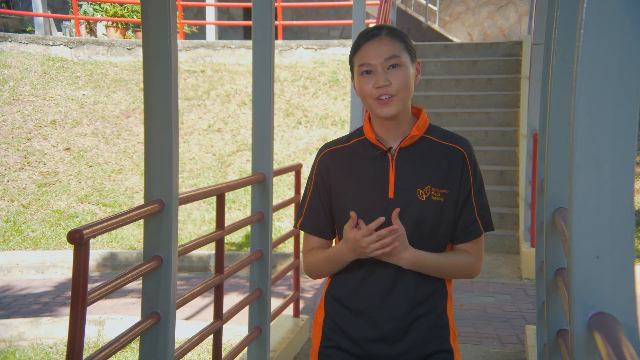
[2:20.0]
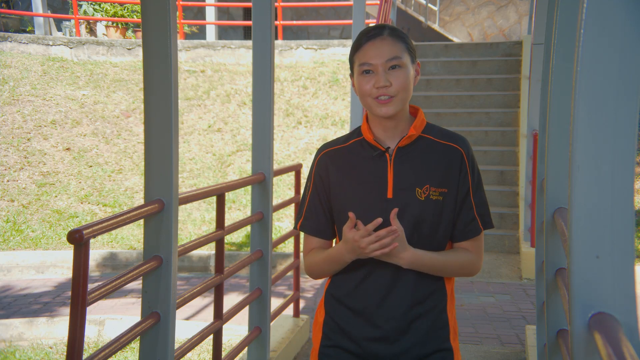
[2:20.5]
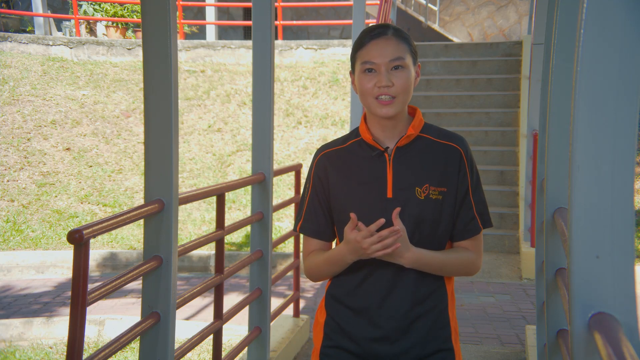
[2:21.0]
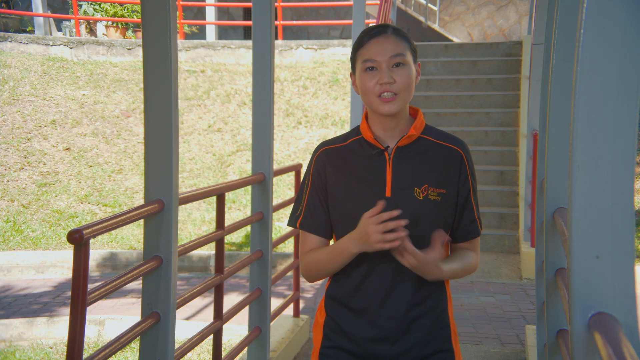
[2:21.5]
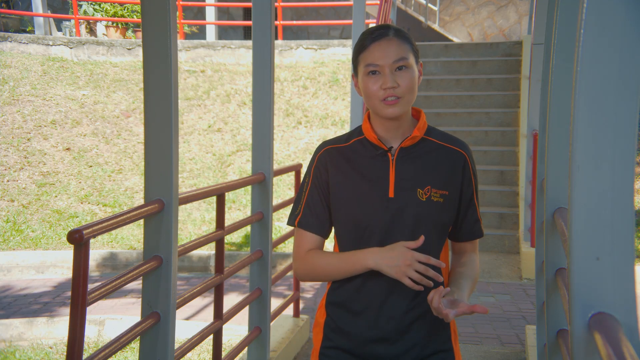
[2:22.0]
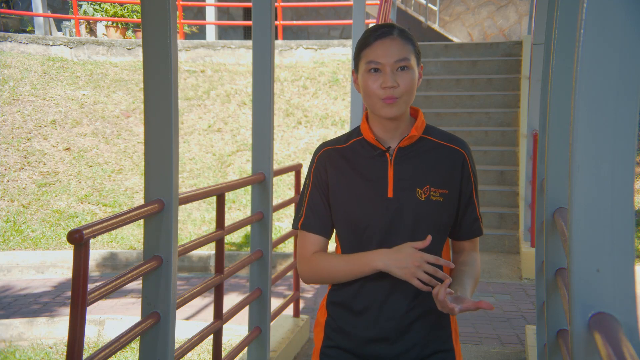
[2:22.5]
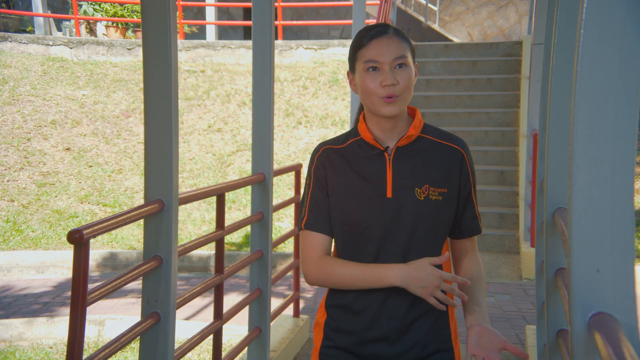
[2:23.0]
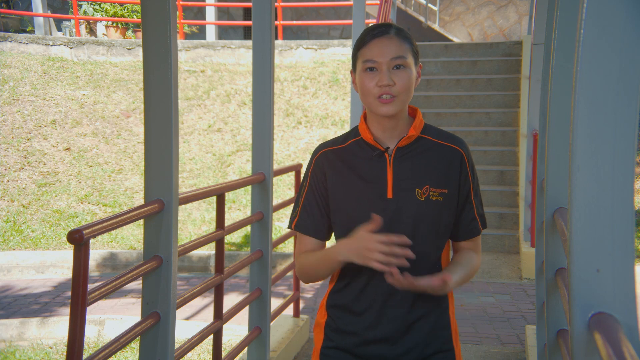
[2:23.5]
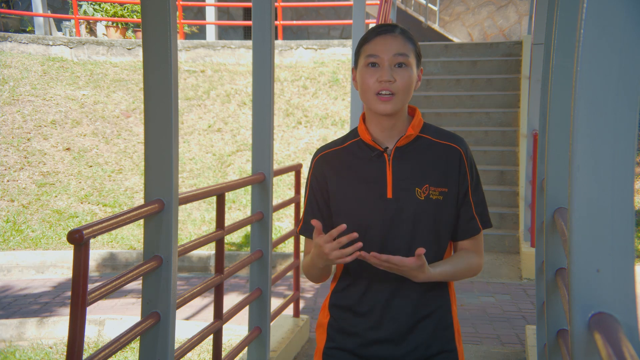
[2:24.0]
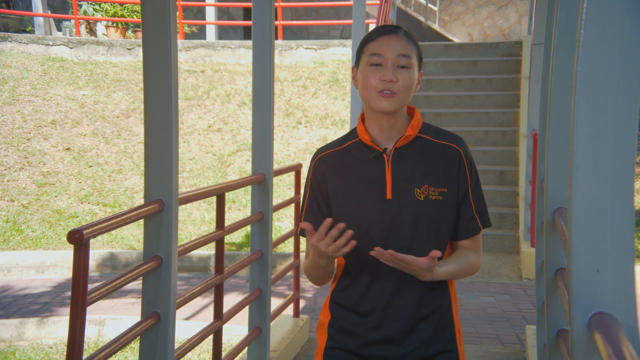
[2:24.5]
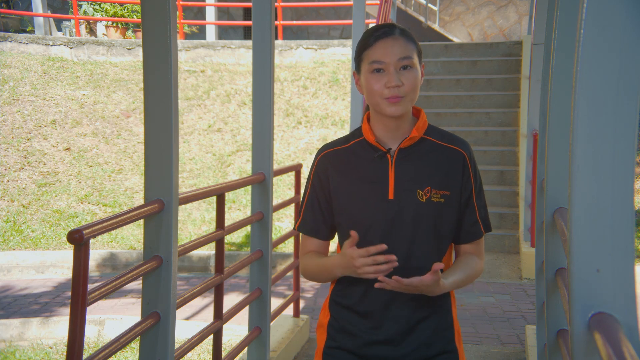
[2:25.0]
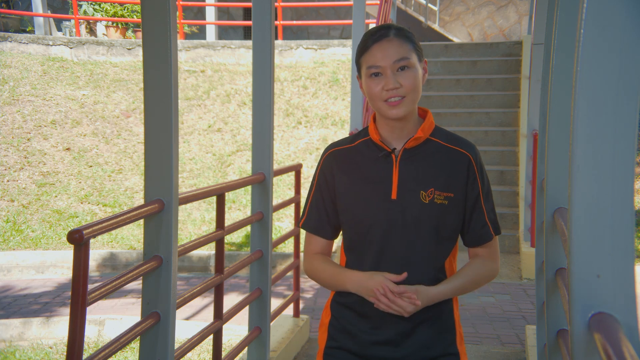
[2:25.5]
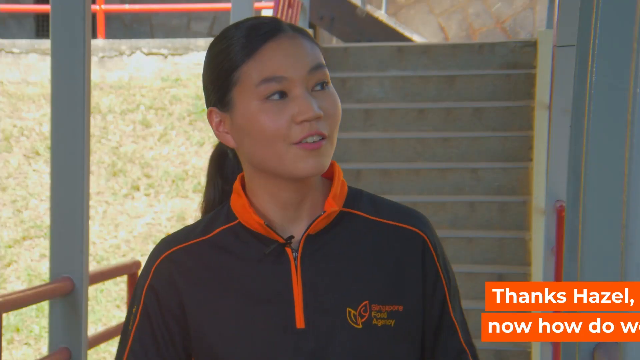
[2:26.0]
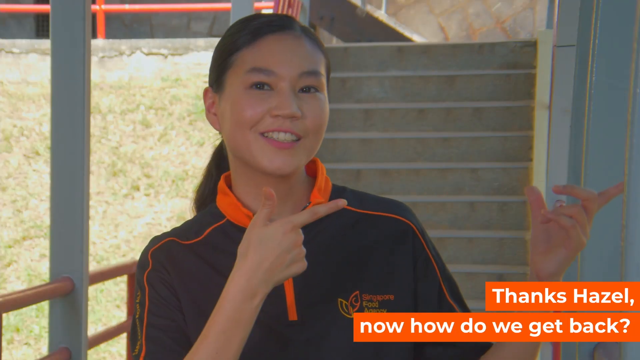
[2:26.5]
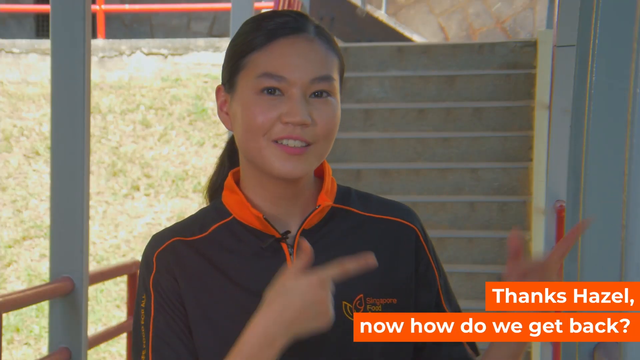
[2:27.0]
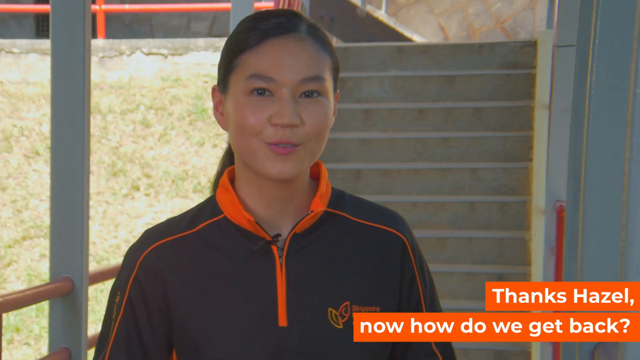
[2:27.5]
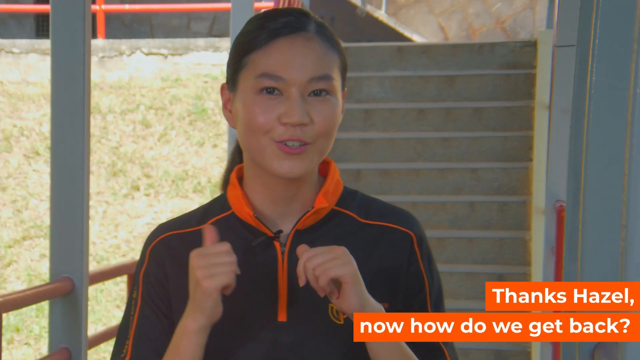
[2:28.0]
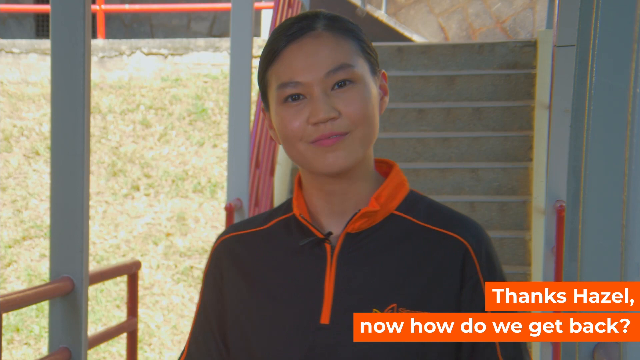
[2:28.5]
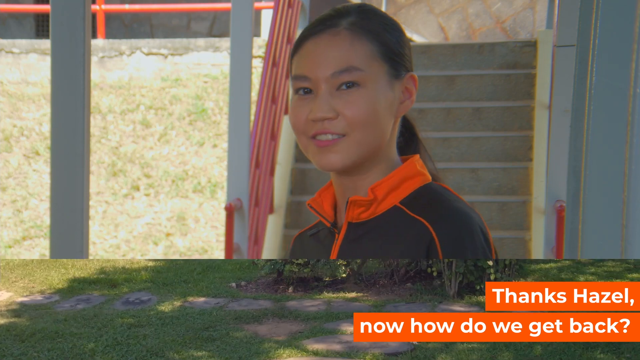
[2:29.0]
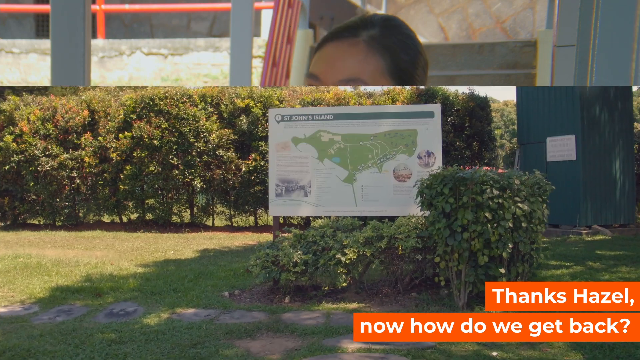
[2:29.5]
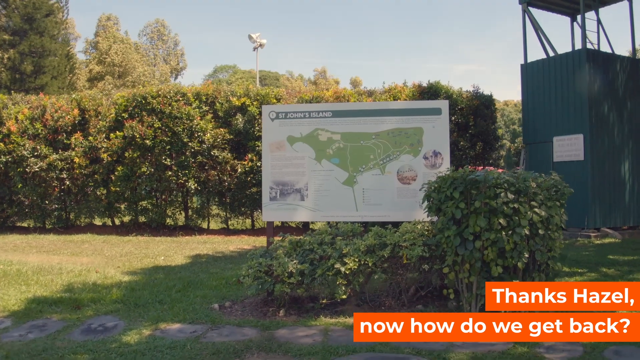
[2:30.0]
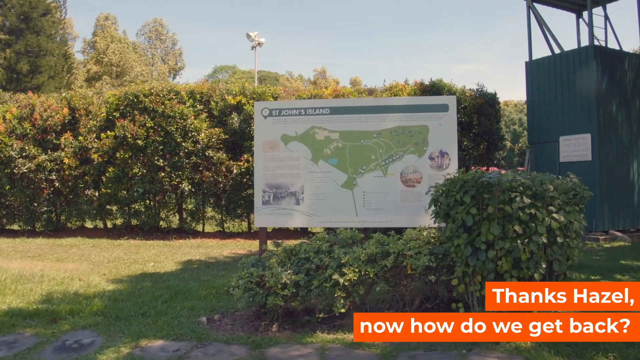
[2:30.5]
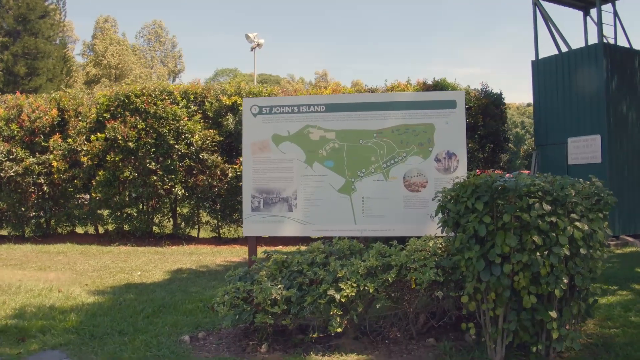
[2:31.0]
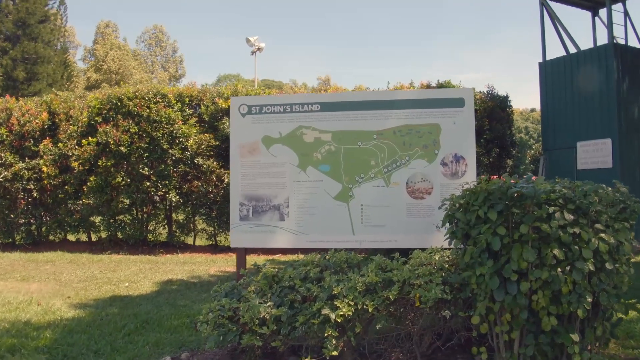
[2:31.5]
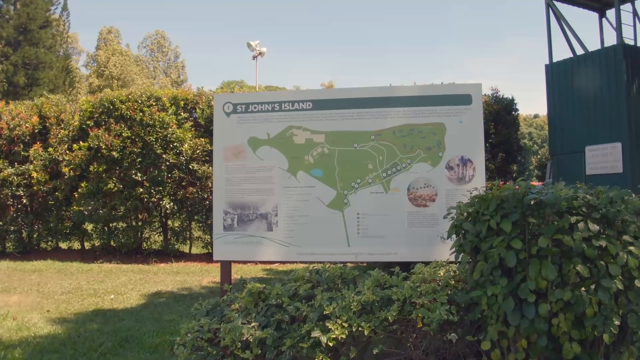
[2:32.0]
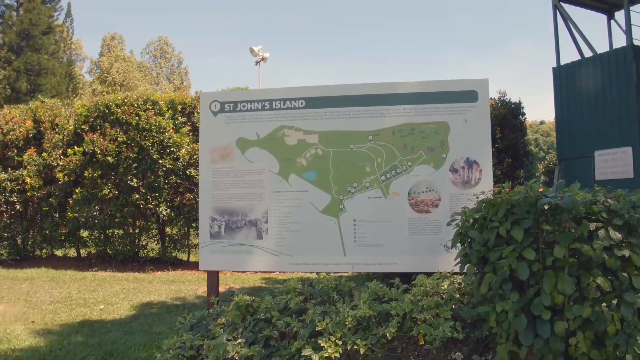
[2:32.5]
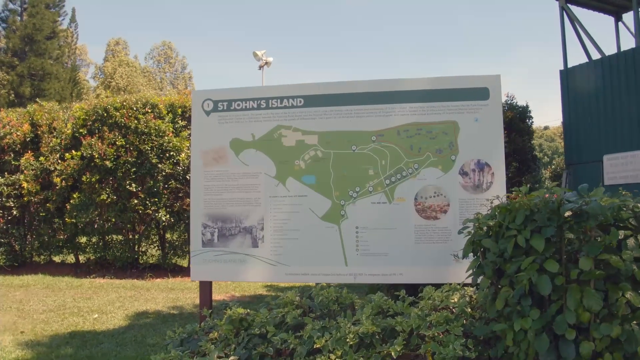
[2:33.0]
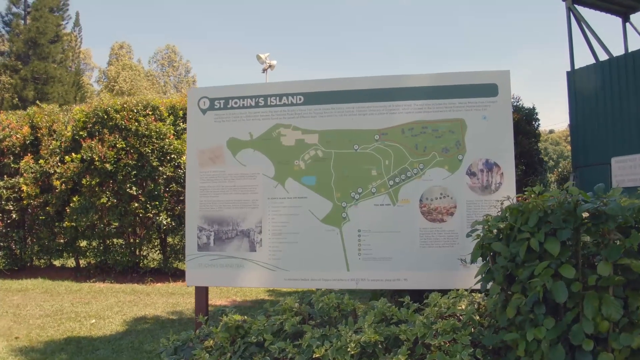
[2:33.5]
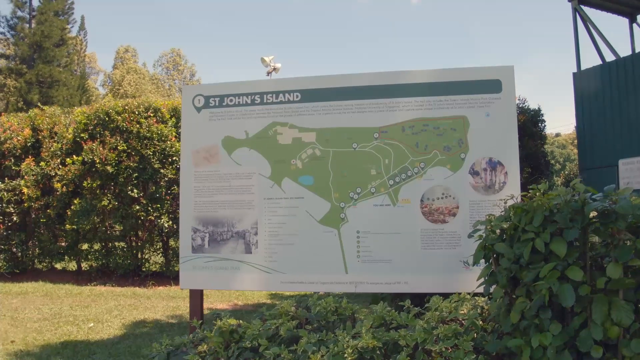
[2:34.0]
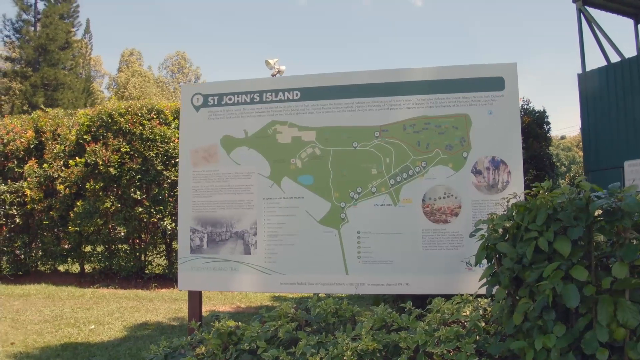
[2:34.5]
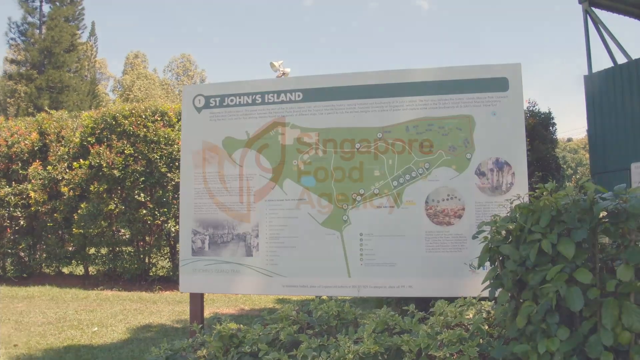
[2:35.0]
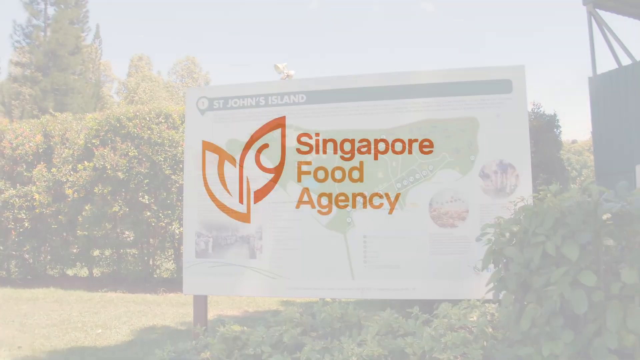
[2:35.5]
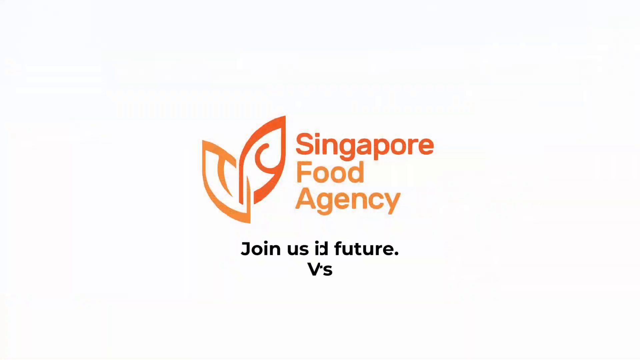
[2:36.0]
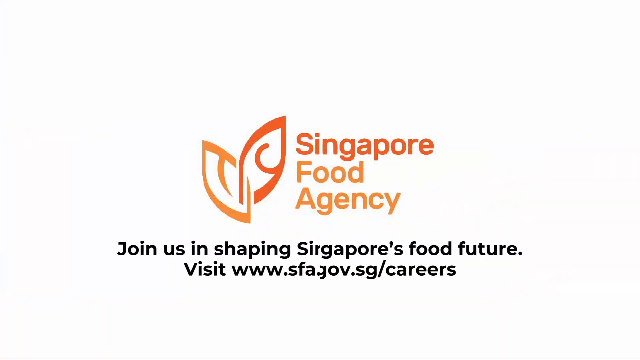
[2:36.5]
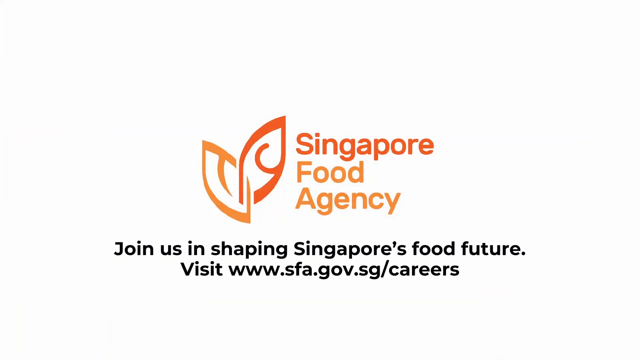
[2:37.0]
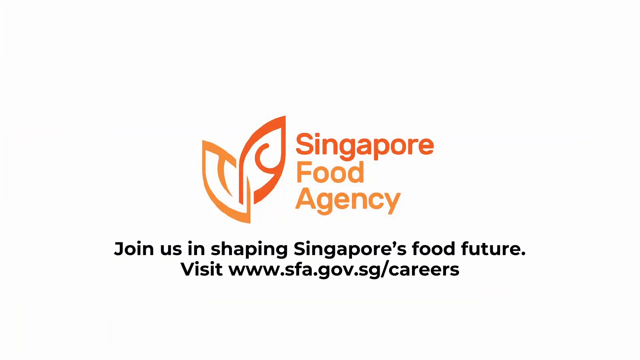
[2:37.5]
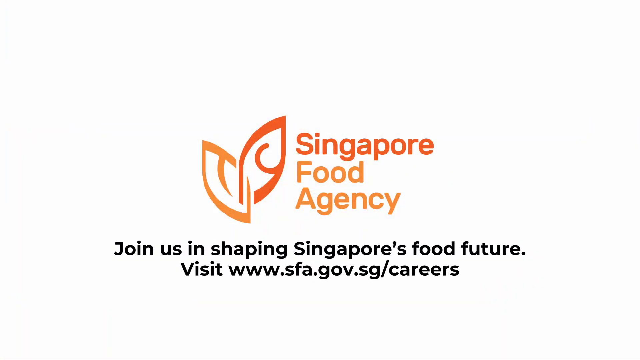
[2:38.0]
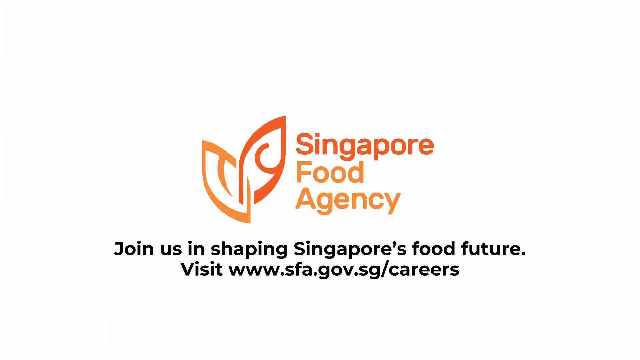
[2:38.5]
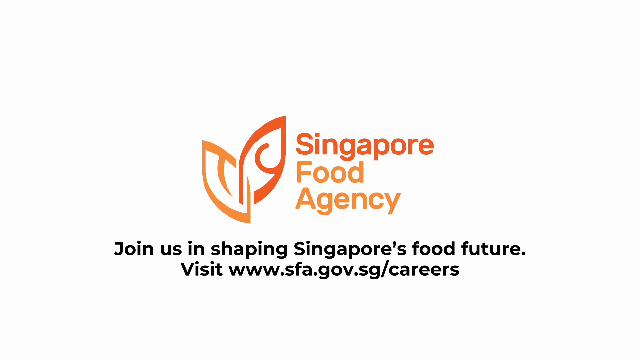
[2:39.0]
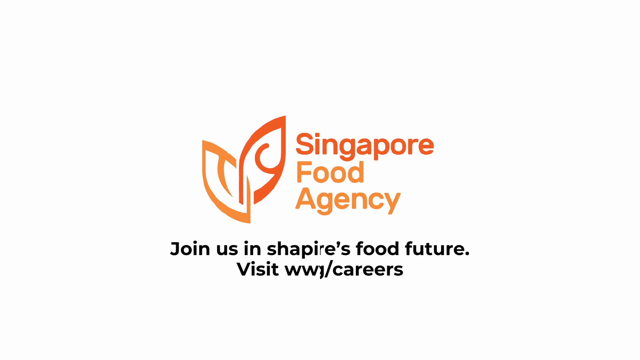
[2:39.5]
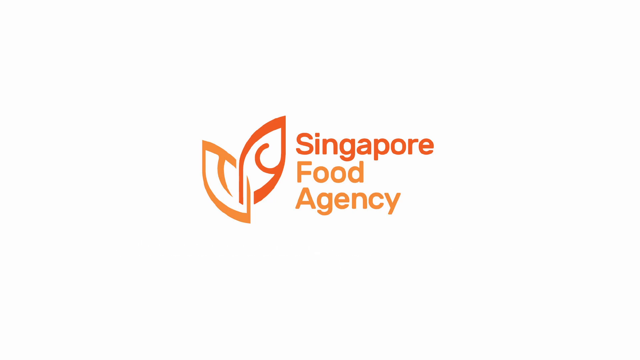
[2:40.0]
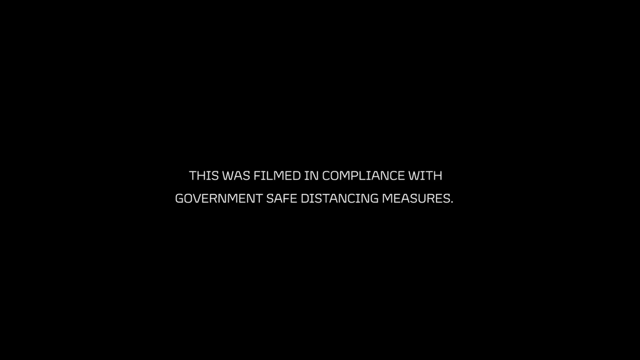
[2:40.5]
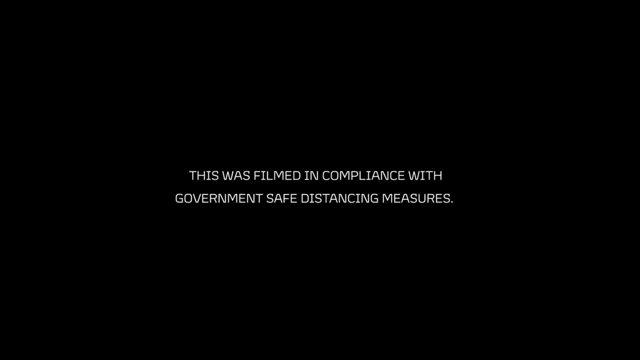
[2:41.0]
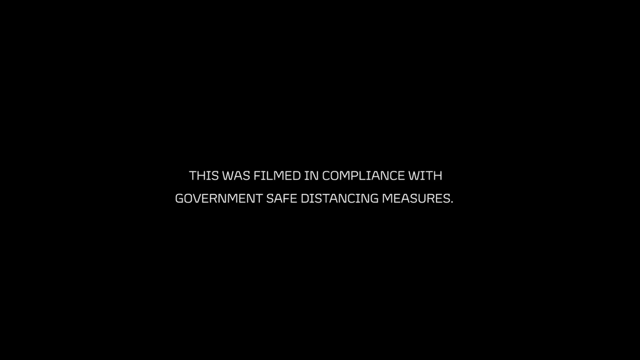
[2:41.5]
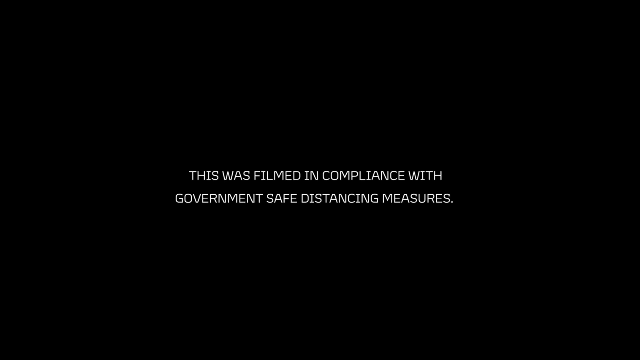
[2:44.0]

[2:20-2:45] The woman stands in front of the outside stairway, pointing to her right. She says "Thanks Haze, now how do we get back?" In the next scene, she walks into the building, puts on her protective gear, and gets ready to work in the laboratory. She looks at the equipment in the laboratory, observes the quality of the fish food, and measures its size. She seems to be looking at the fish food inside the bin; it appears uniform in color and size. Next, she stands next to several large pools containing fish. She throws food into the fish tanks, and the fish eagerly rise to the surface to eat. She continues to walk through the laboratory, observing all the pools of fish and feeding them as she smiles.